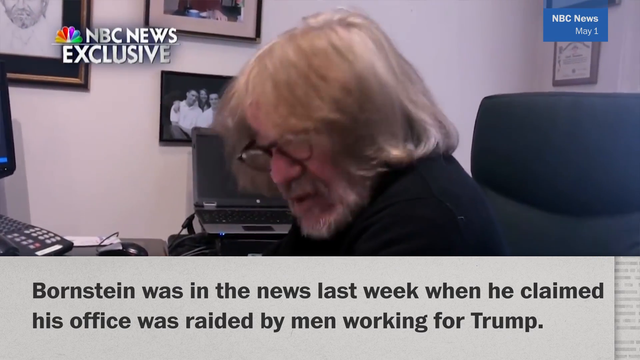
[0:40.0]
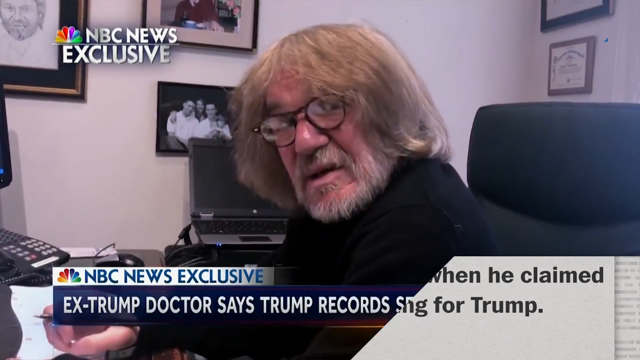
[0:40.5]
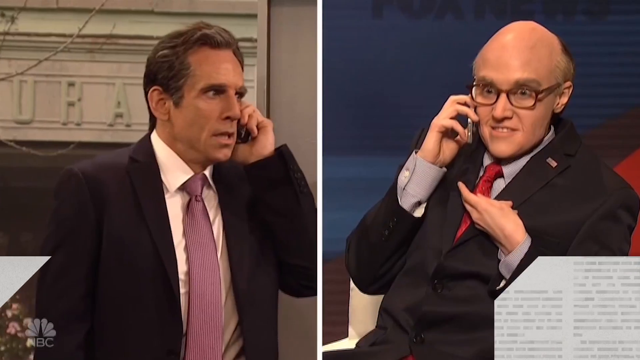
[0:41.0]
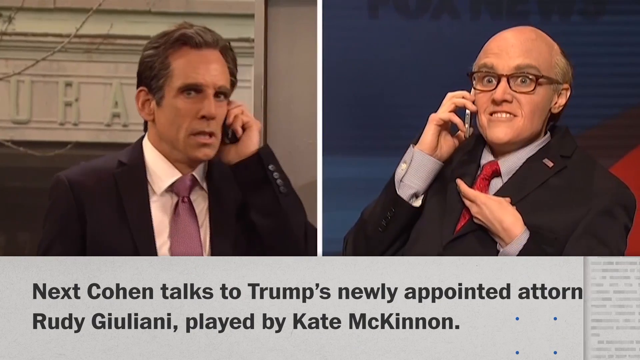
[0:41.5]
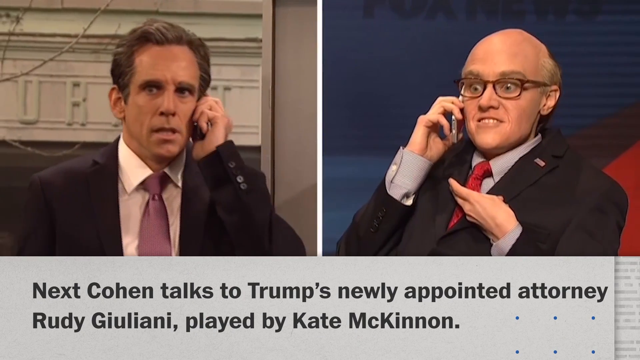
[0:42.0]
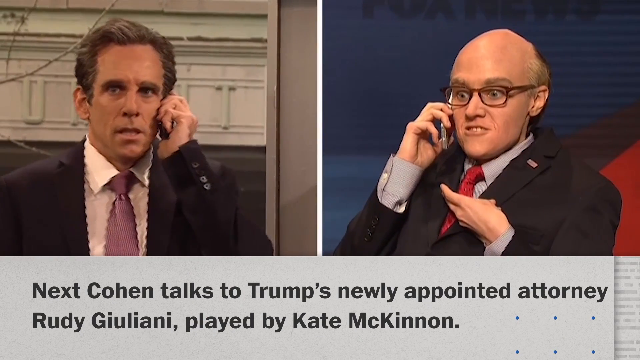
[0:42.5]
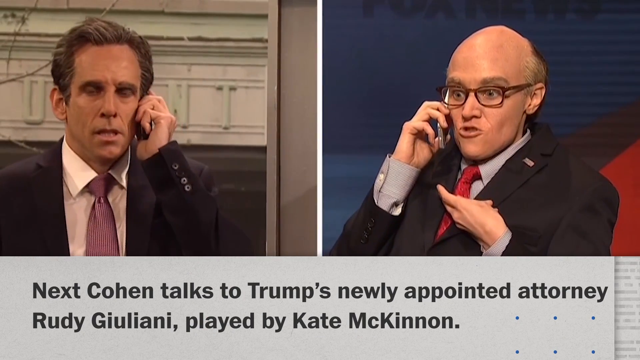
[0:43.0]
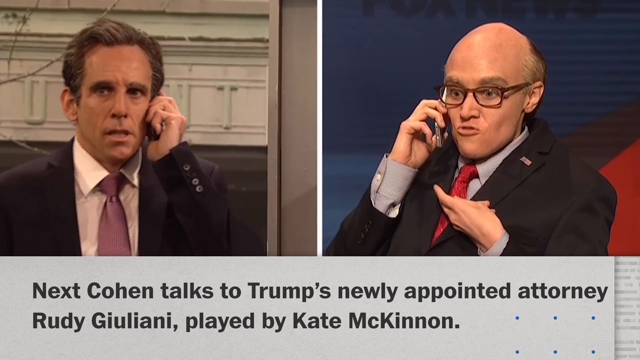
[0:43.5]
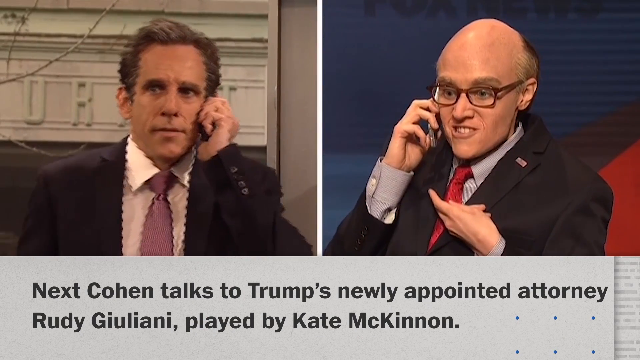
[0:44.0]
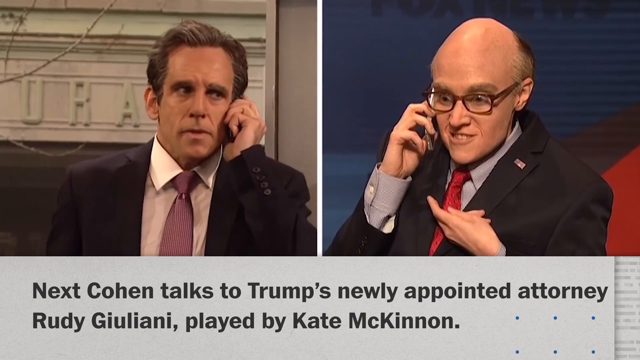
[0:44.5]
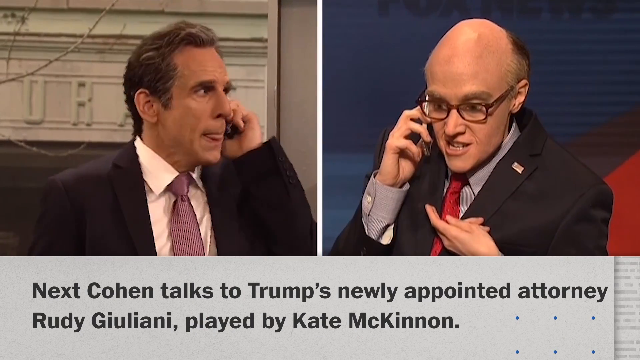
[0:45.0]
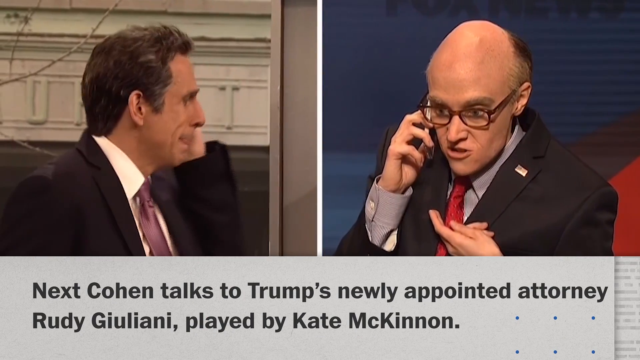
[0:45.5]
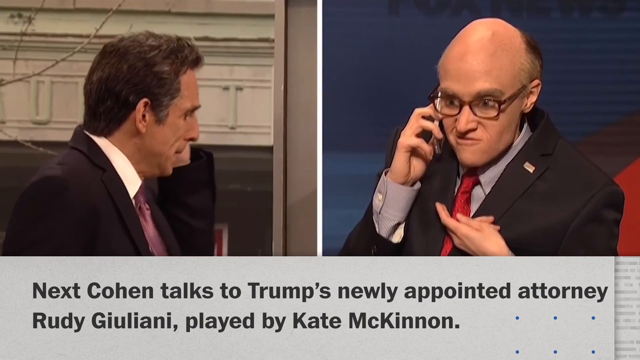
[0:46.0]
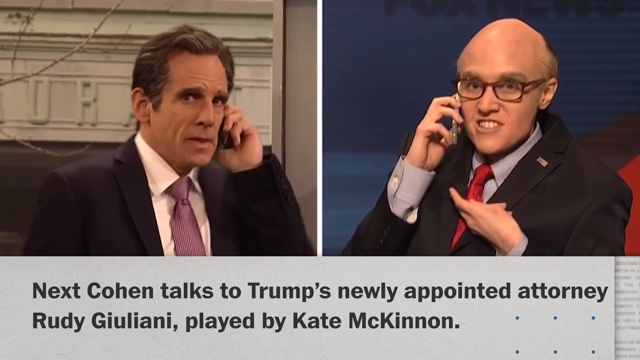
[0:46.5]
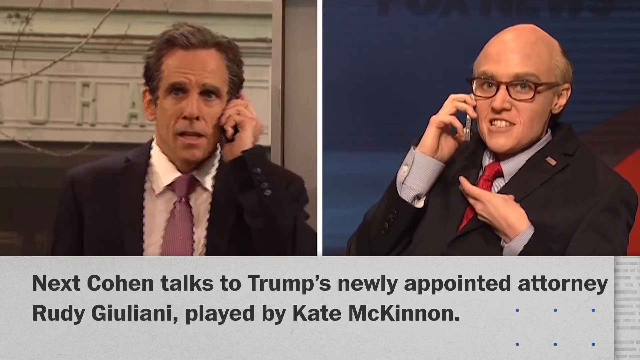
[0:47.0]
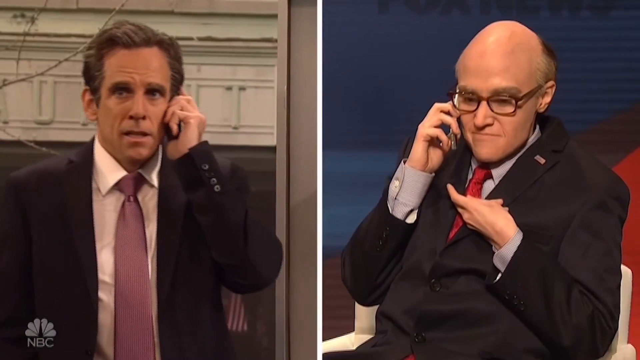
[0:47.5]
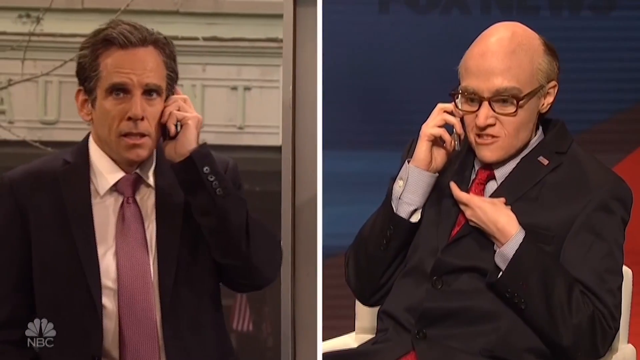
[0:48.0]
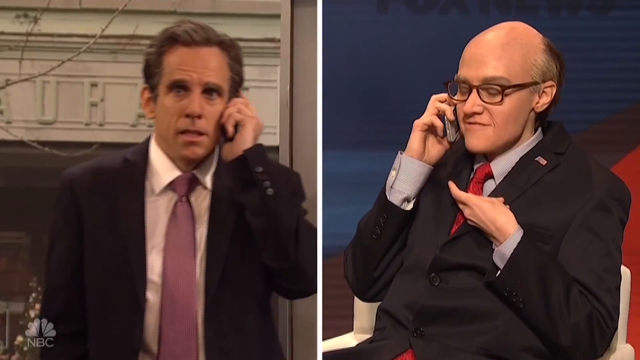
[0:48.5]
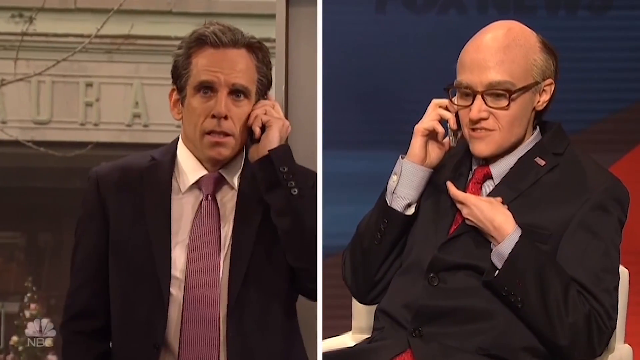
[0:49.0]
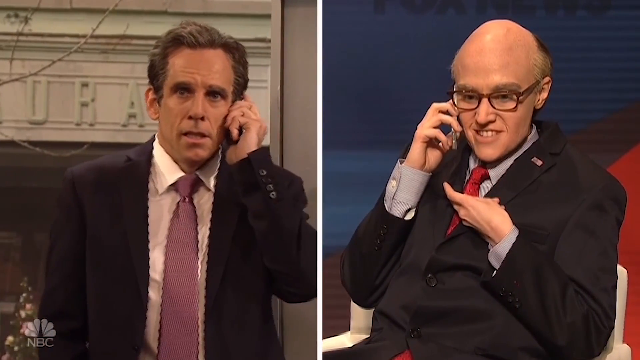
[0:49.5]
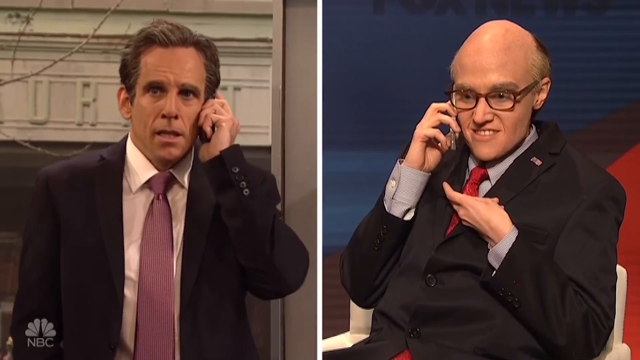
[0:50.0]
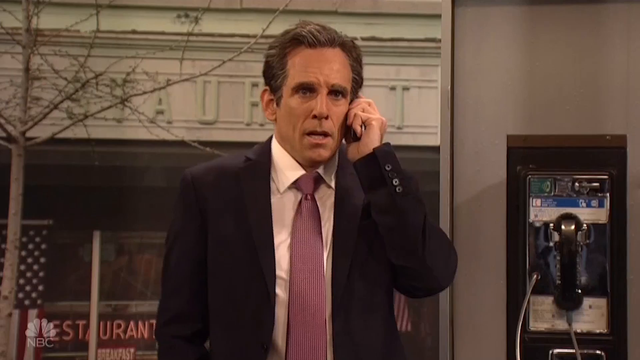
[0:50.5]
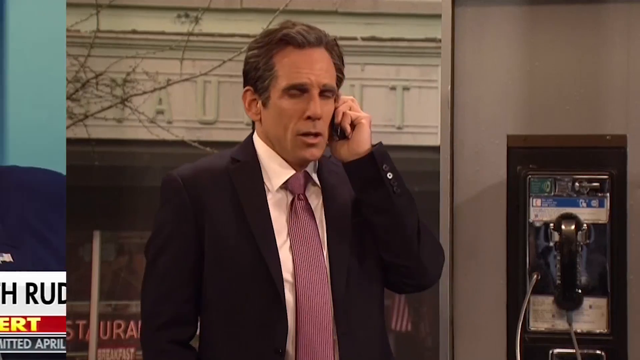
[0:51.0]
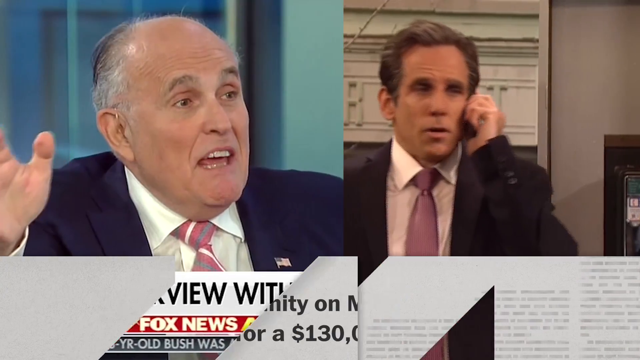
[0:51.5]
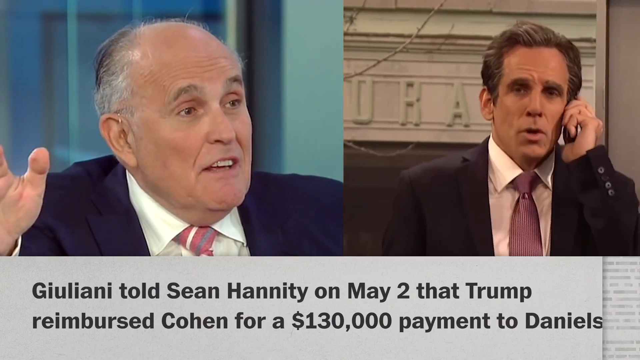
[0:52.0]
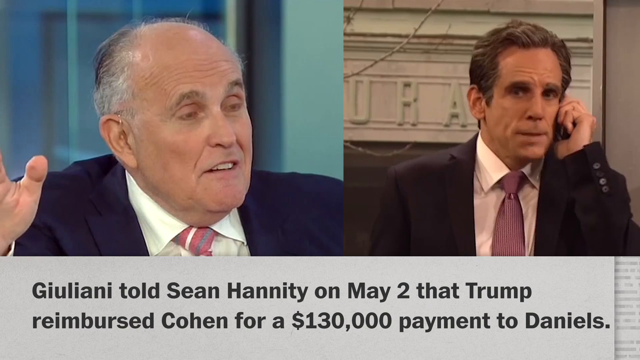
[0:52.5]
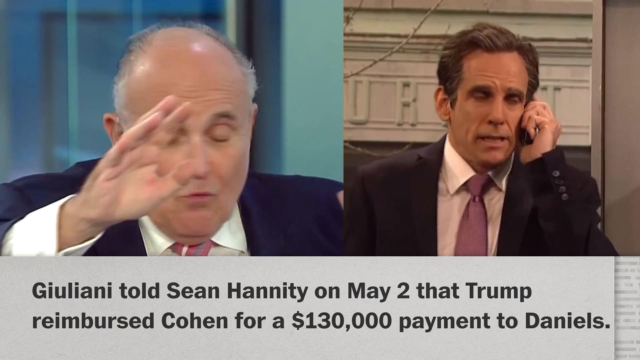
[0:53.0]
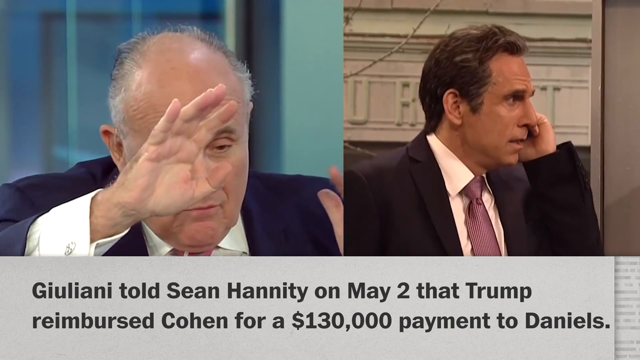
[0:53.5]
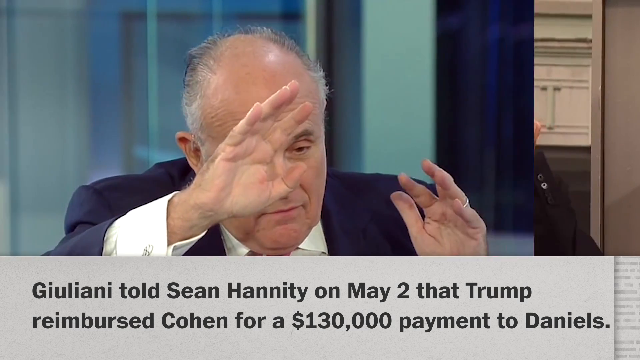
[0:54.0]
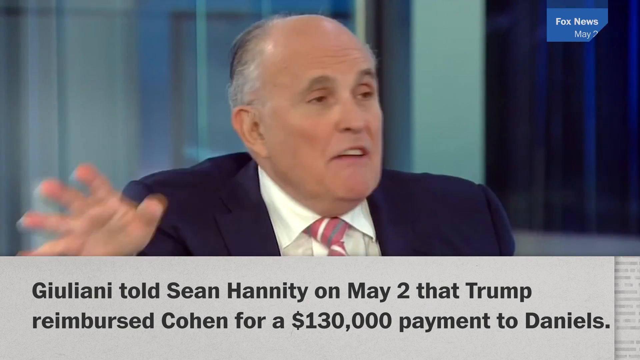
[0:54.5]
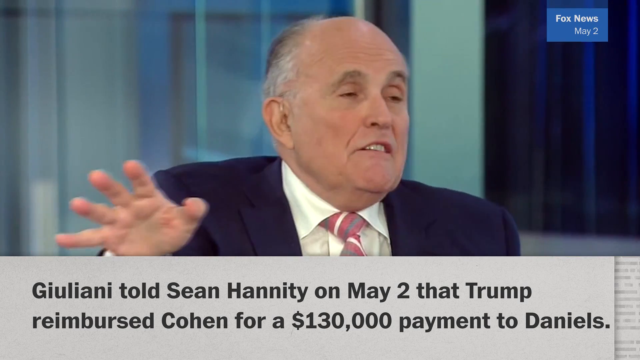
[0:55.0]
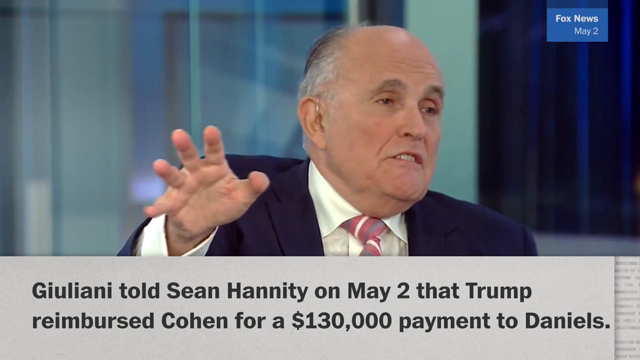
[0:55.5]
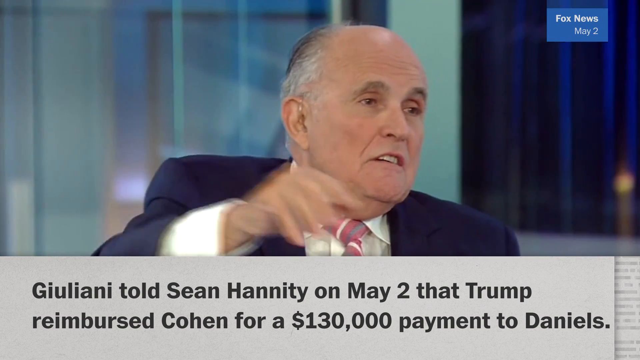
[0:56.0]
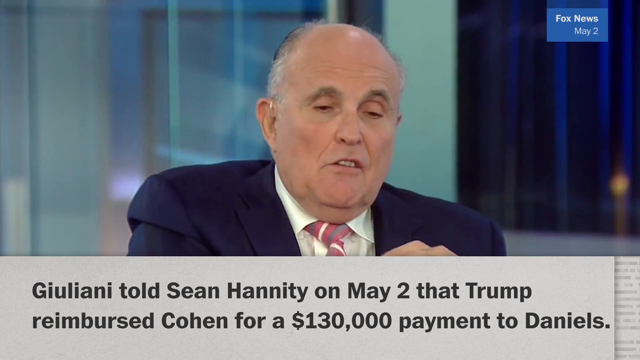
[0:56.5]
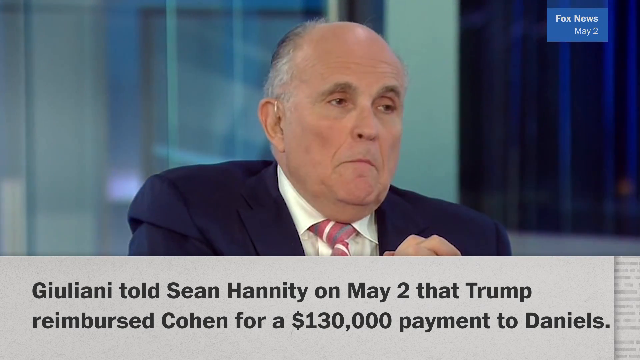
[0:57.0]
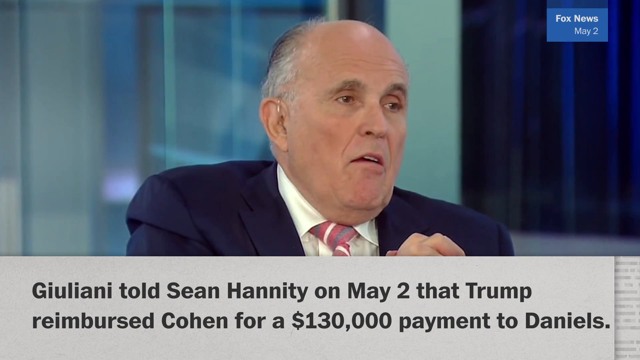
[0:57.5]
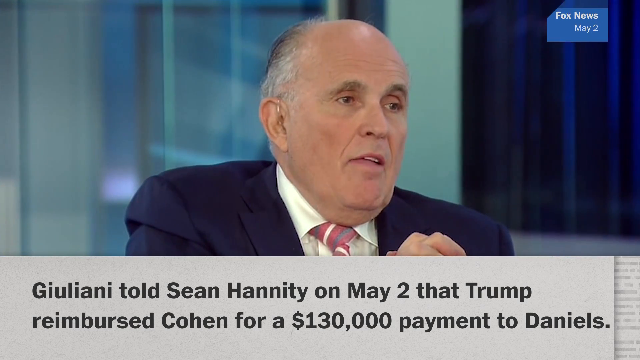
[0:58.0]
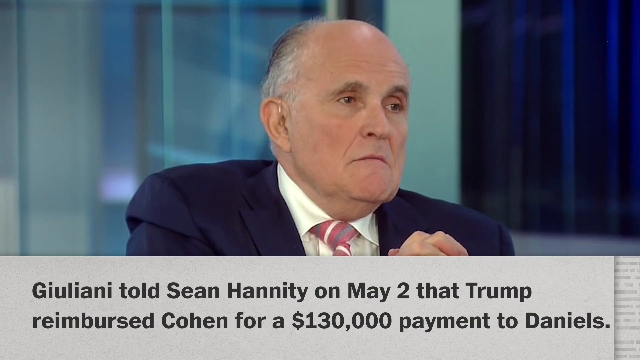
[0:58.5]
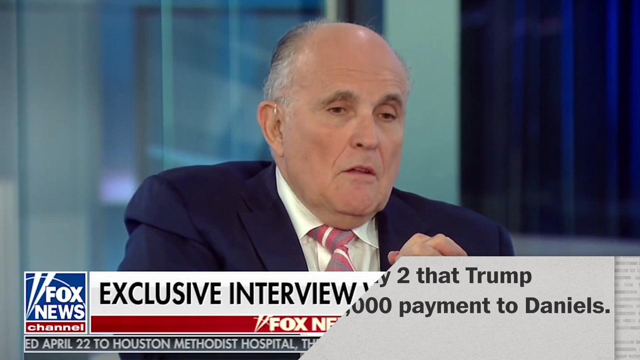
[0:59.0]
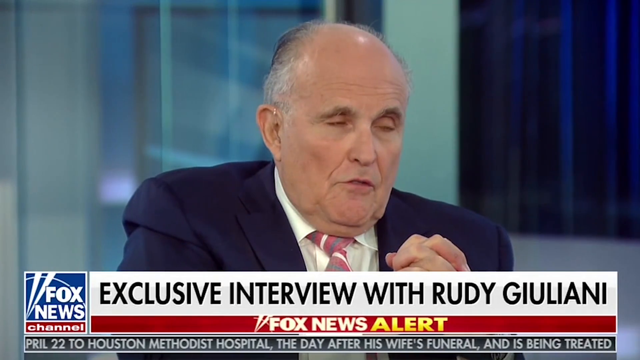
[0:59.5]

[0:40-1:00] The Saturday Night Live skit shows people talking on the phone, with one actor playing Michael Cohen and another playing Giuliani. "NBC News exclusive" appears when the skit footage comes up. The actors look very much like the real people they portray. One, labeled as Bornstein, has very long hair and a very long beard. Giuliani is shown with his bald head, and Michael Cohen talks on the phone frantically, looking both ways and around the room. Real footage of Giuliani then comes in: he is being interviewed on May 2nd about Trump, with "Fox News" on screen. Subtitles at the bottom explain the situation, but only the top sentence is visible and the others are cut off.